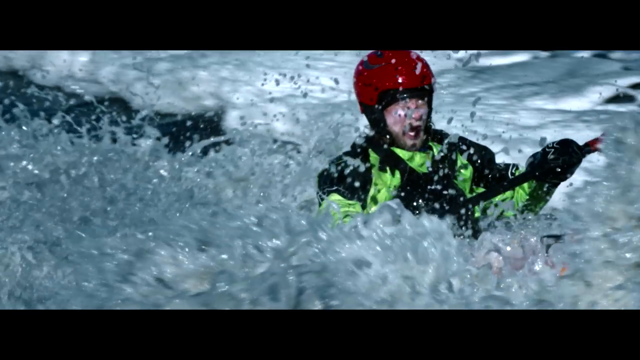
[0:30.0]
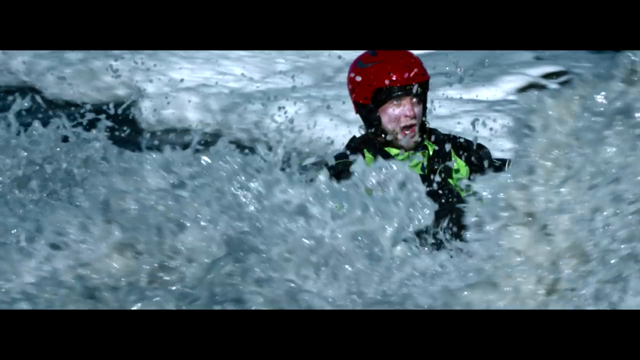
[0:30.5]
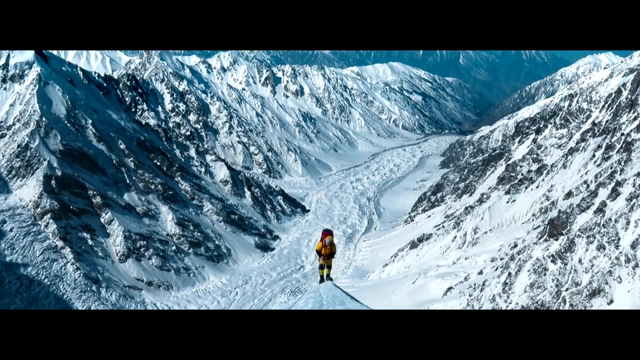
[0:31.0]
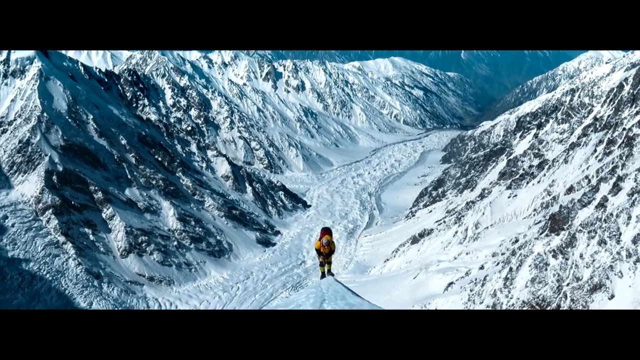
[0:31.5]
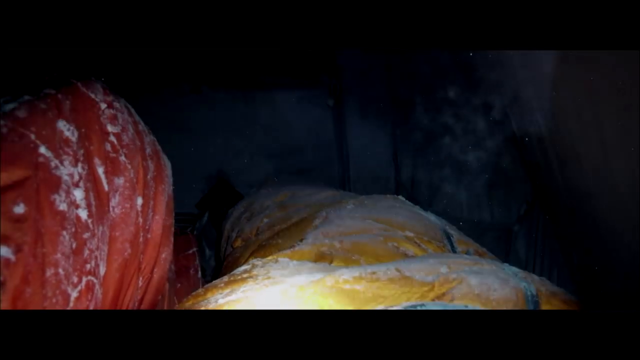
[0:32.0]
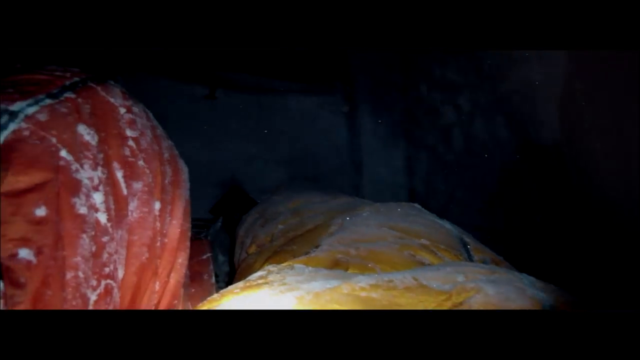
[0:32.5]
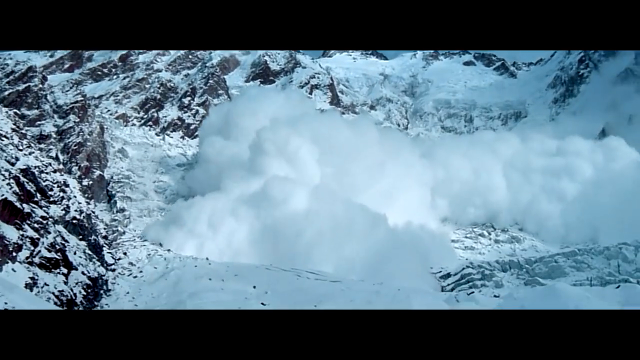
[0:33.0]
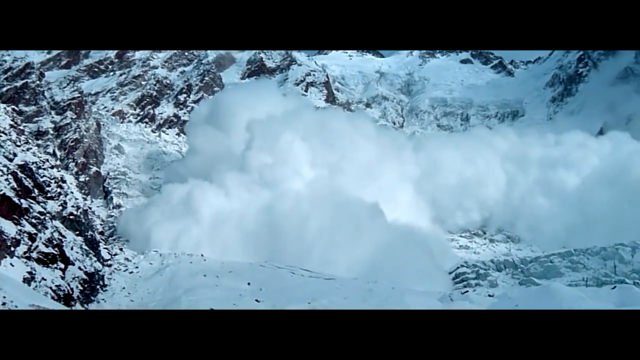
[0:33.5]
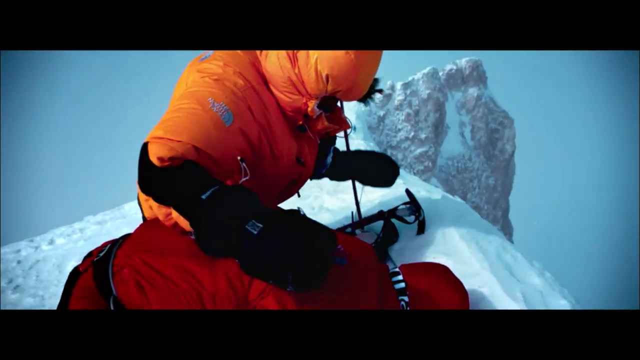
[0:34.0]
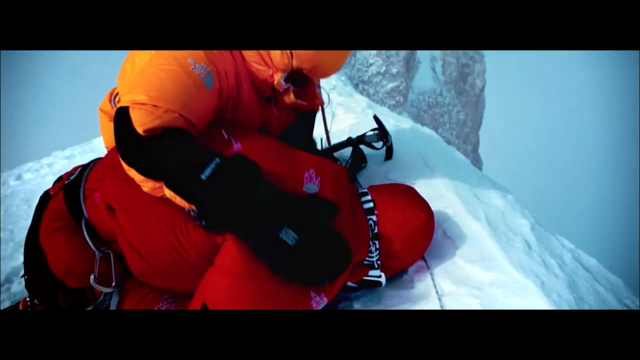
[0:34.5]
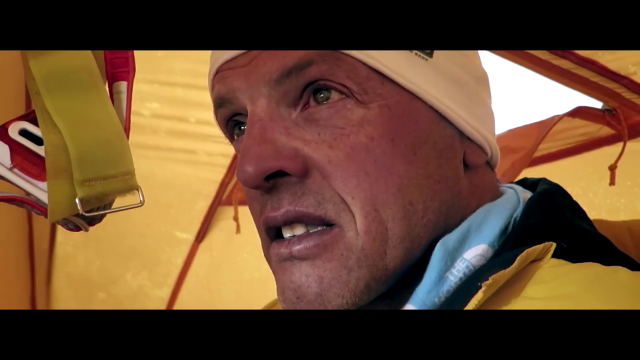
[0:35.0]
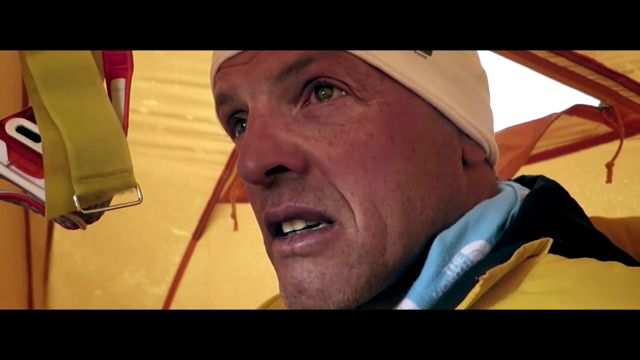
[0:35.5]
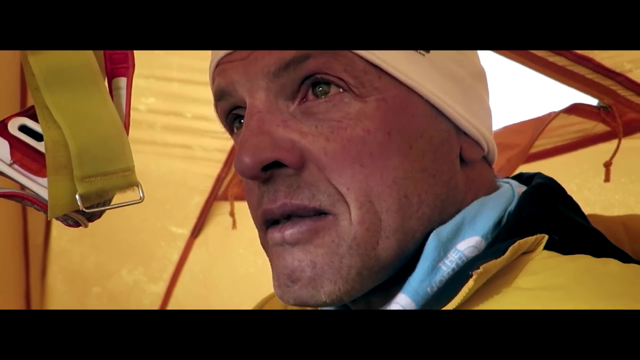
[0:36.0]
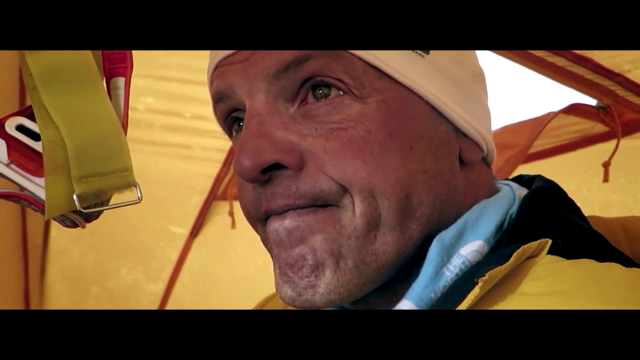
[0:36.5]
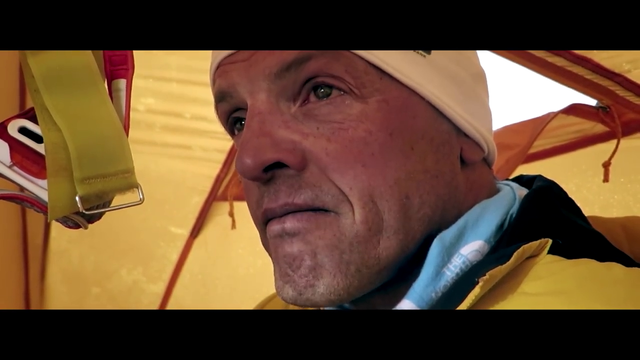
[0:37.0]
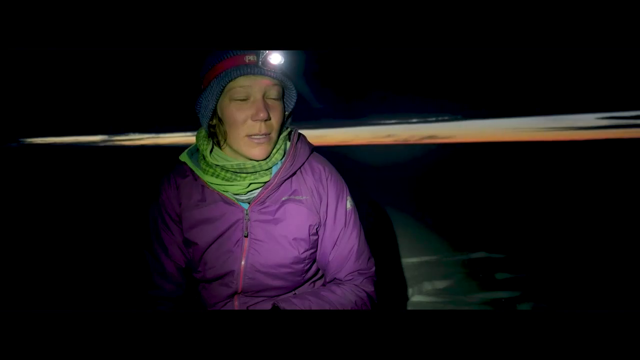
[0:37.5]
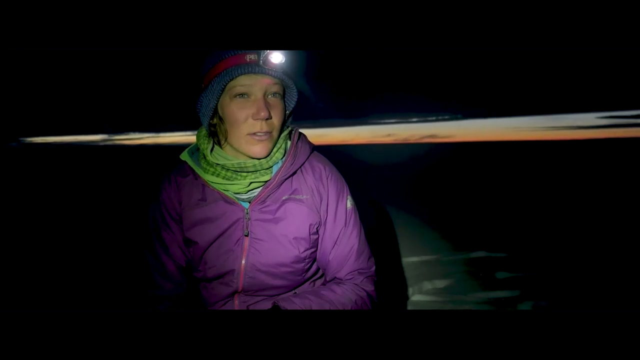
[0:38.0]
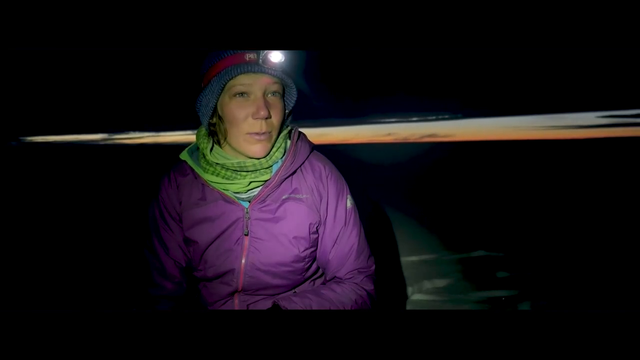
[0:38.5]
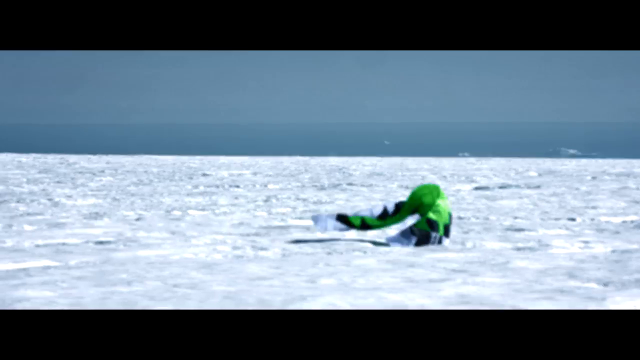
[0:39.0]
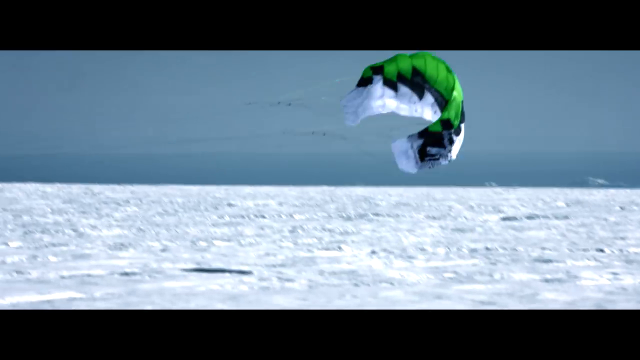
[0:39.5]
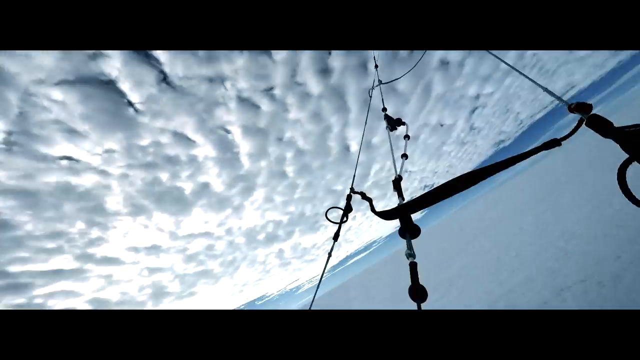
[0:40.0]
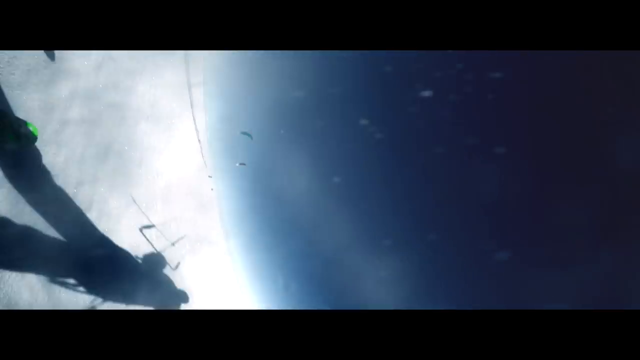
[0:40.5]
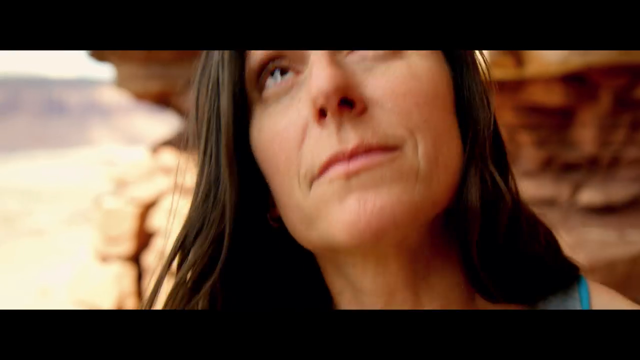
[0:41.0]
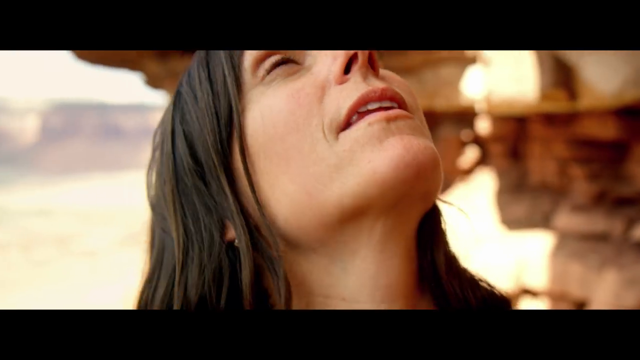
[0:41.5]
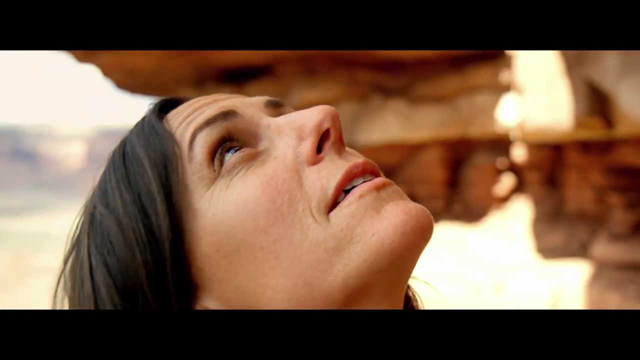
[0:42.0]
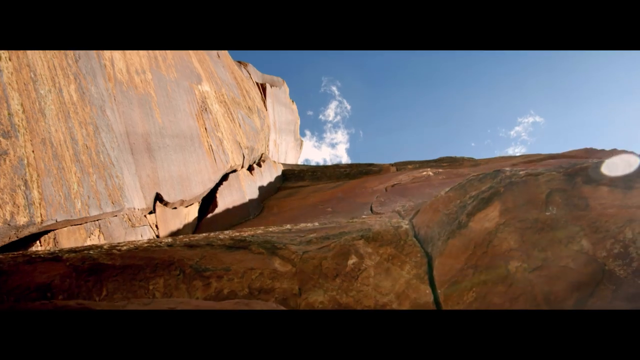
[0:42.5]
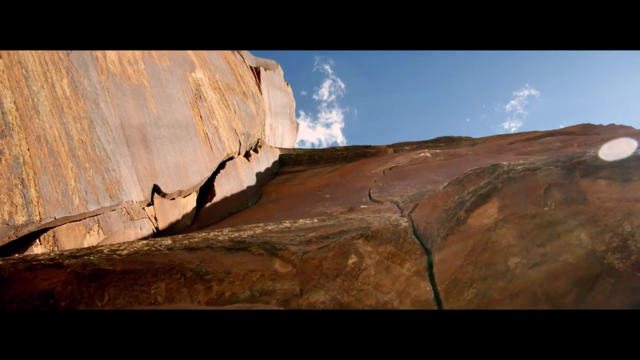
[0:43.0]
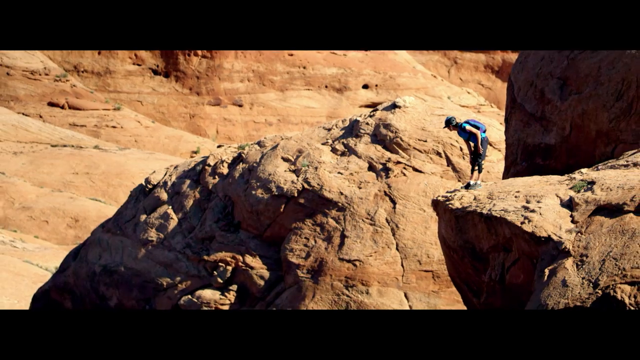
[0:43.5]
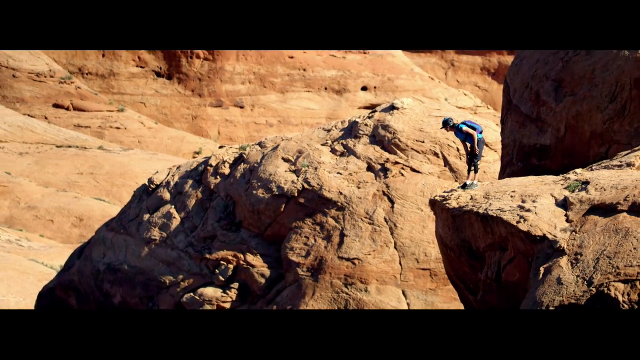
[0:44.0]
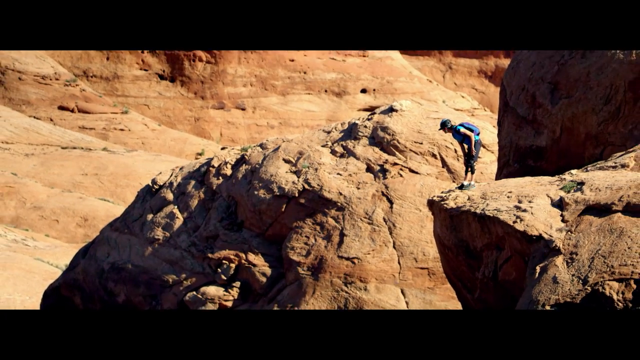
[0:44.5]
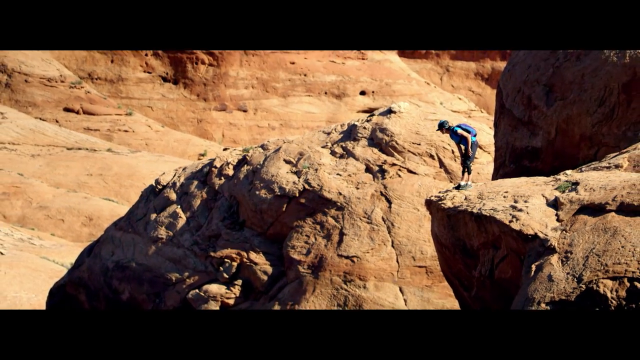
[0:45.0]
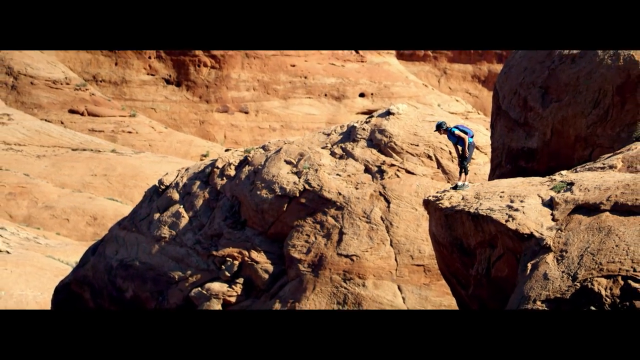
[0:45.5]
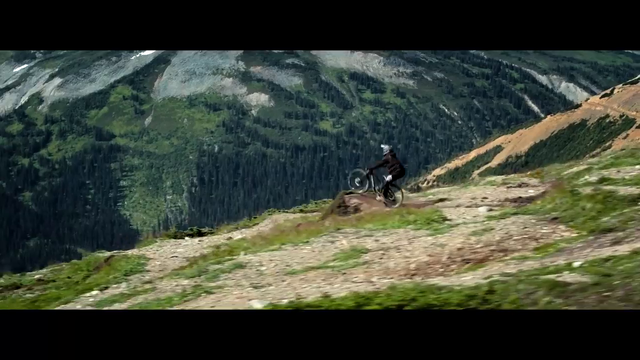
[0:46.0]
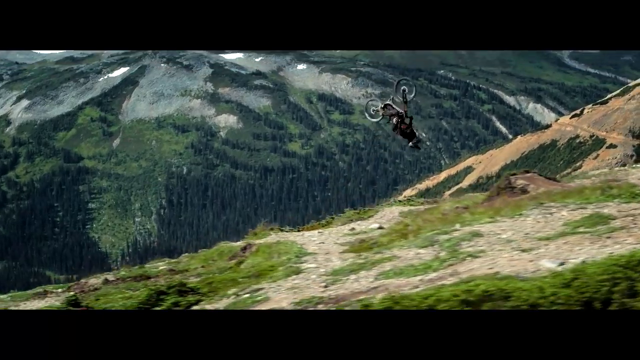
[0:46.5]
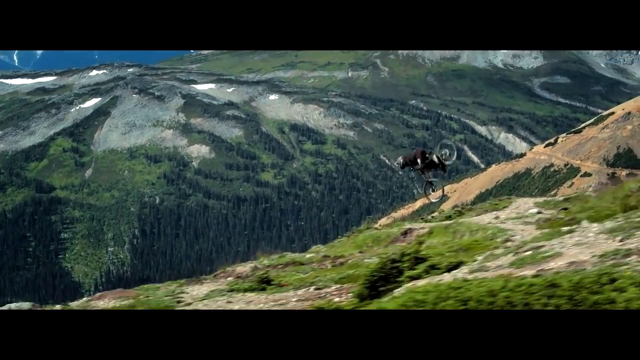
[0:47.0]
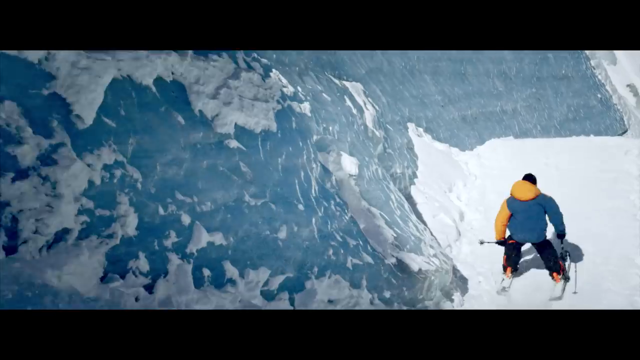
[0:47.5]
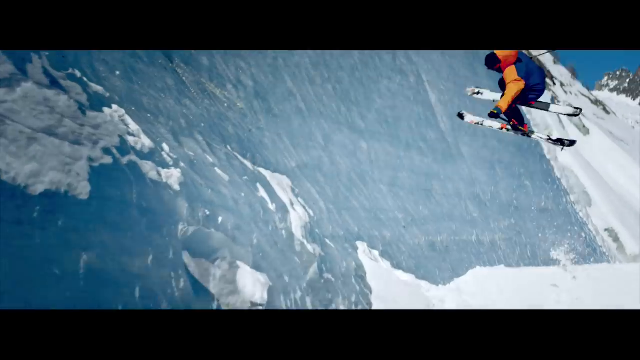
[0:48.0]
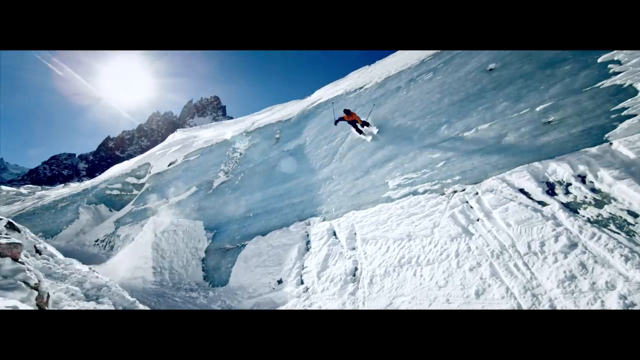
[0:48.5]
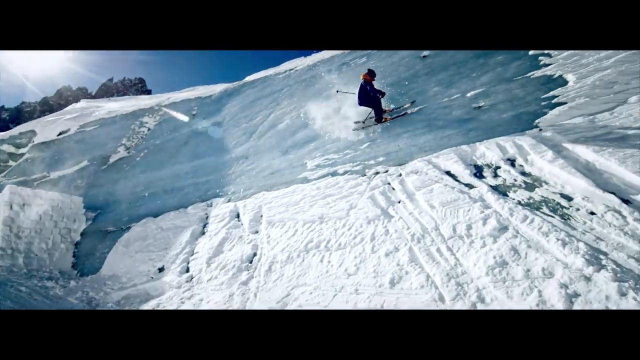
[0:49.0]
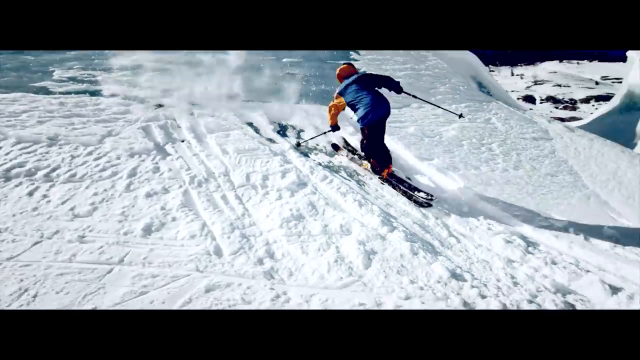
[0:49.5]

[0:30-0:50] A landscape is covered by a thick layer of snow, and a person walks along a pathway in the middle of the screen, coming toward the camera. A video taken at night follows; it is very dark and could be inside a tent. Someone holds a flashlight, and there is some colorful, snow-covered cloth in the dark. Another shot in the snowy mountains shows a big cloud forming in the middle, probably after a landslide. Some people dressed in very thick winter clothing are almost hugging each other in the snow. A close-up shows a man with a tired and sad expression, wearing winter clothing inside a yellow tent. A girl wearing a purple coat and hat, with a flashlight on her forehead, speaks to the camera, with almost complete darkness around her. A parachute opens in a snowy landscape. A headshot shows a woman with dark hair looking up, surrounded by a rocky location and bright blue sky. A person glances down a rocky side, with rocky mountains in the background. Multiple very fast shots follow: a biker riding through a green mountain landscape, someone skiing on the snow, and a man riding a kayak on a river.